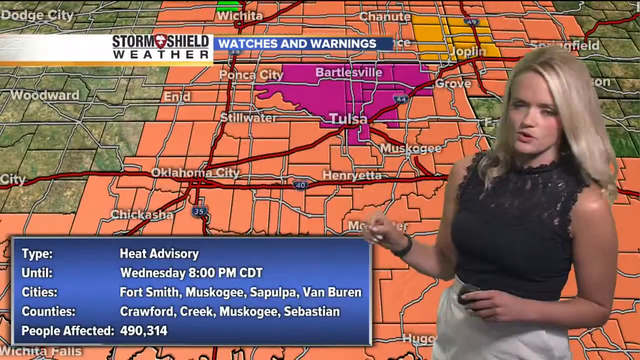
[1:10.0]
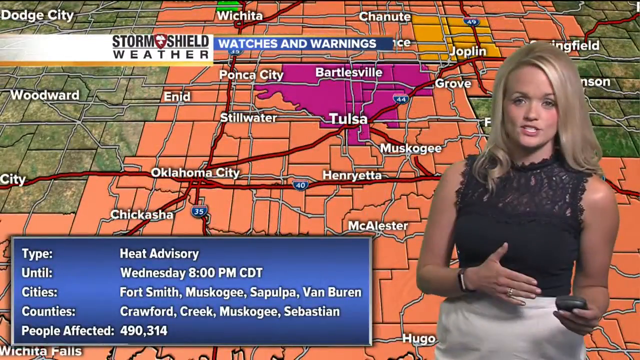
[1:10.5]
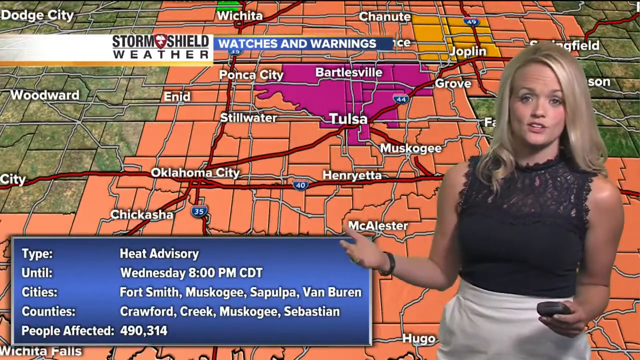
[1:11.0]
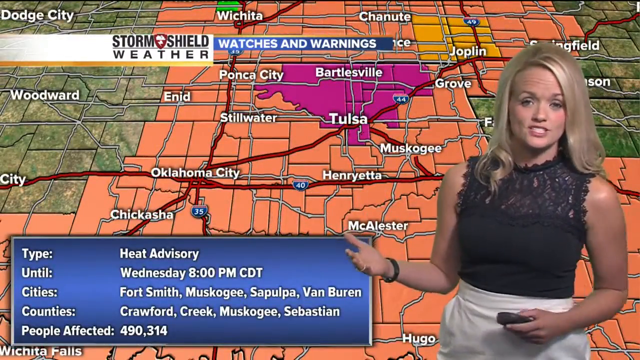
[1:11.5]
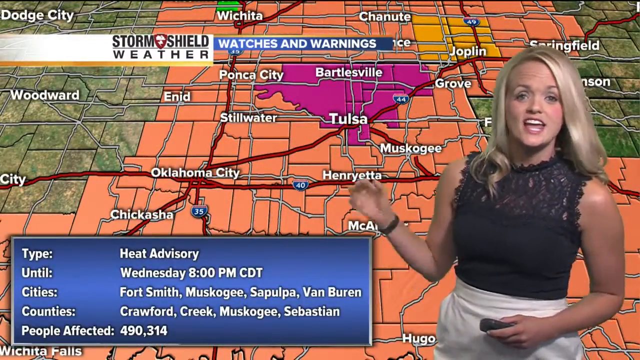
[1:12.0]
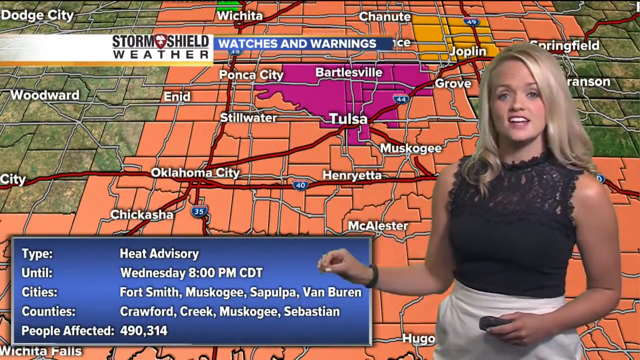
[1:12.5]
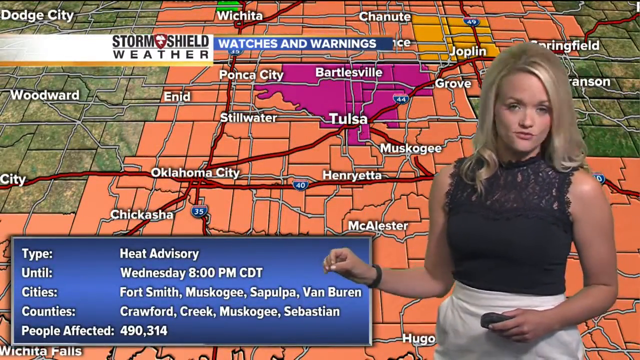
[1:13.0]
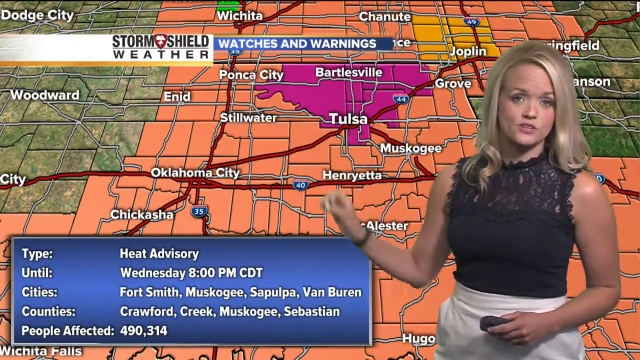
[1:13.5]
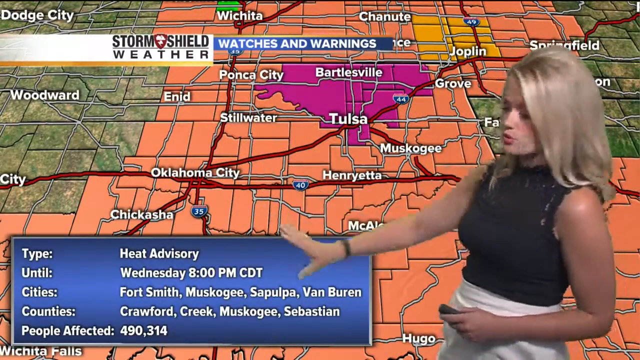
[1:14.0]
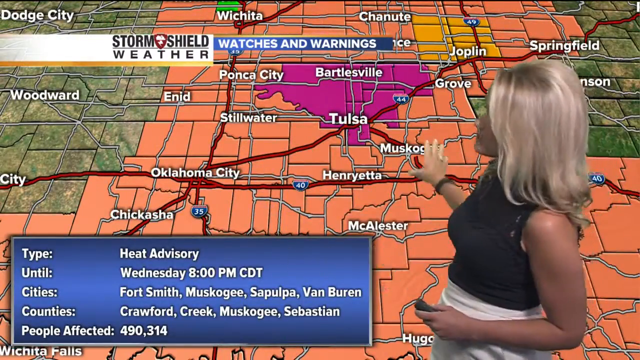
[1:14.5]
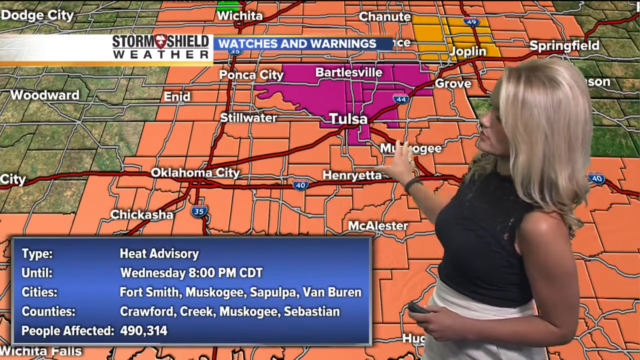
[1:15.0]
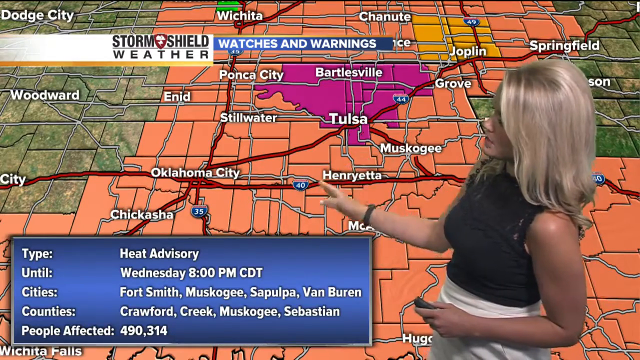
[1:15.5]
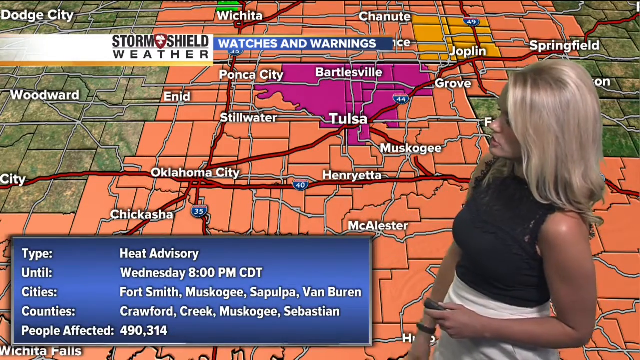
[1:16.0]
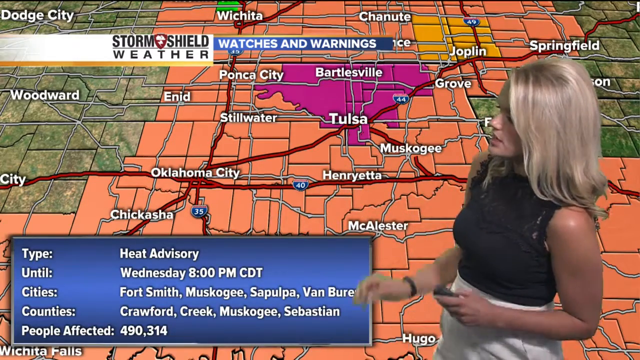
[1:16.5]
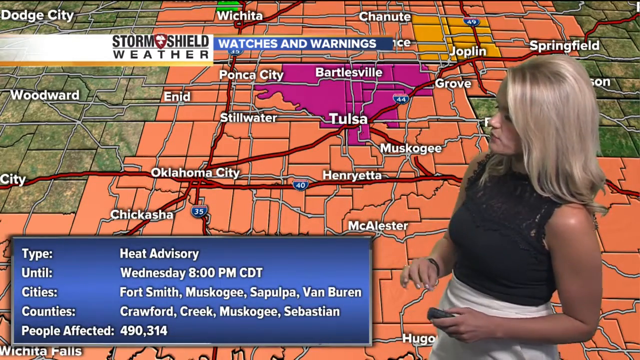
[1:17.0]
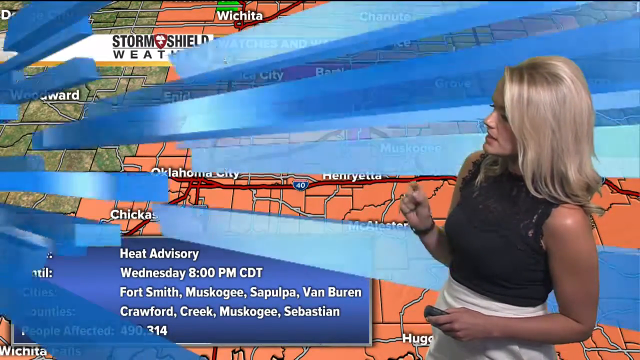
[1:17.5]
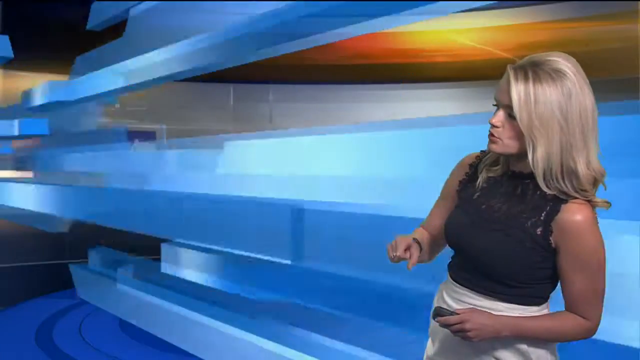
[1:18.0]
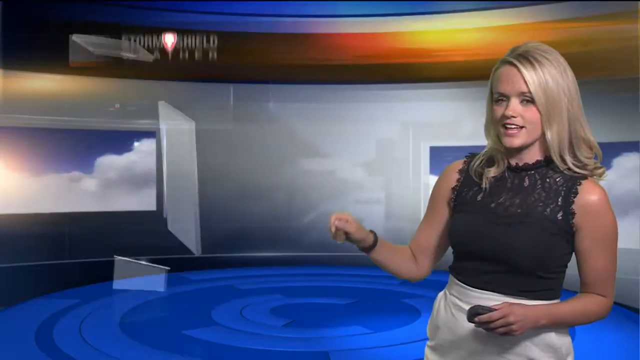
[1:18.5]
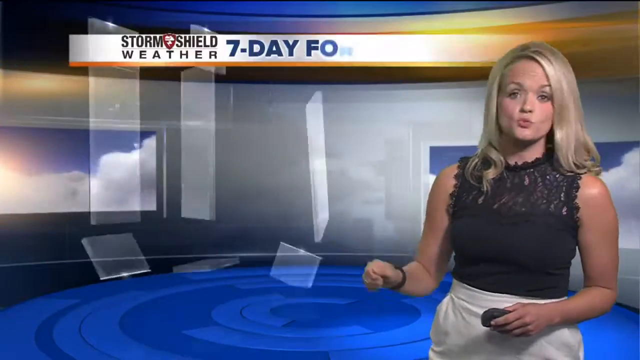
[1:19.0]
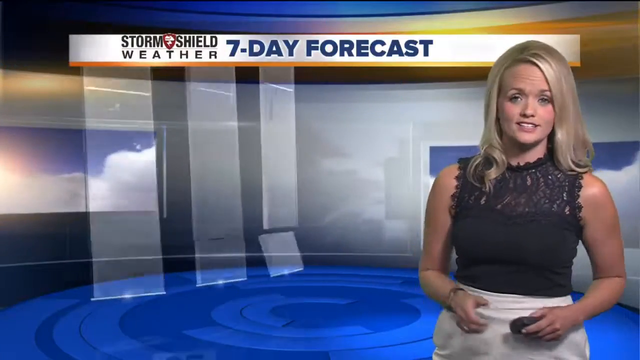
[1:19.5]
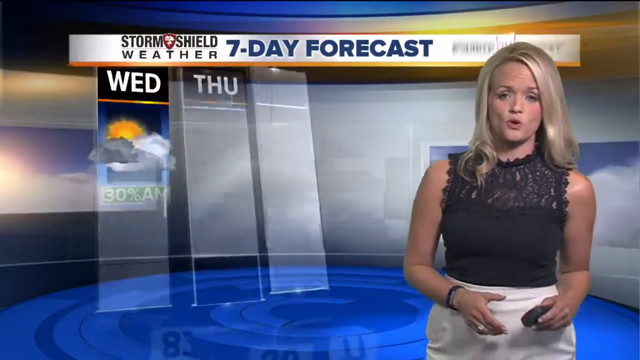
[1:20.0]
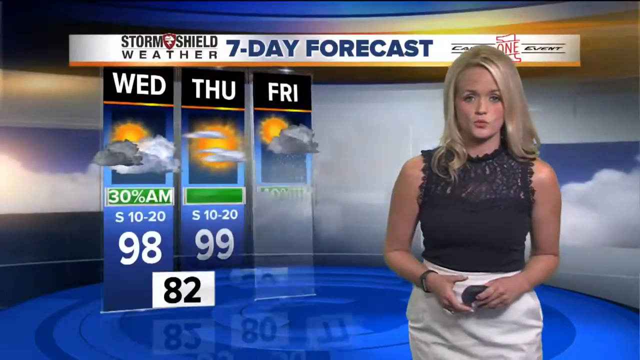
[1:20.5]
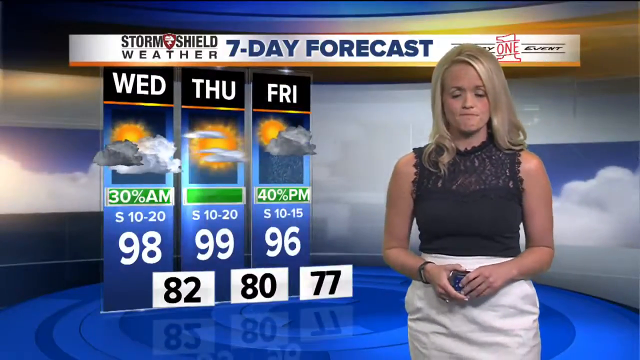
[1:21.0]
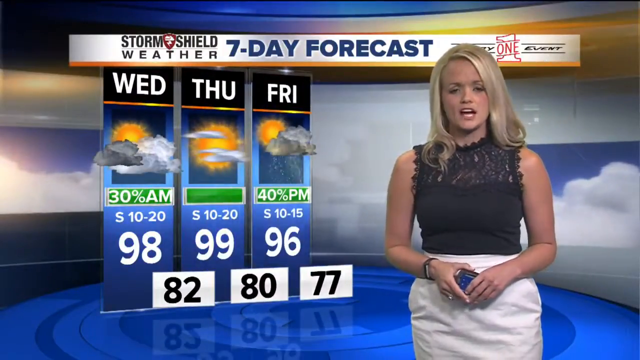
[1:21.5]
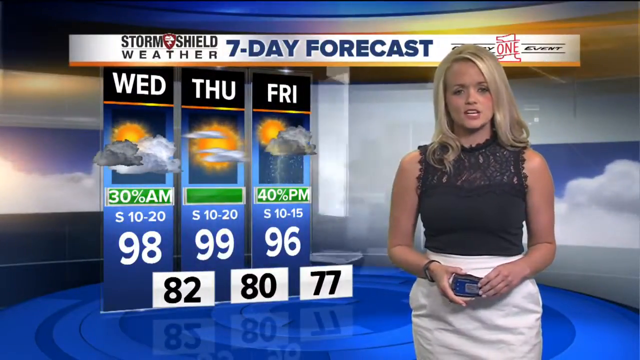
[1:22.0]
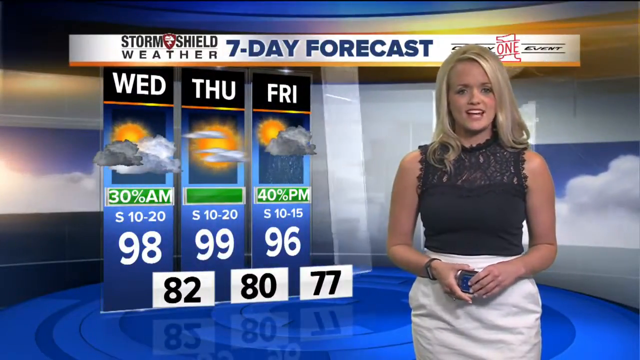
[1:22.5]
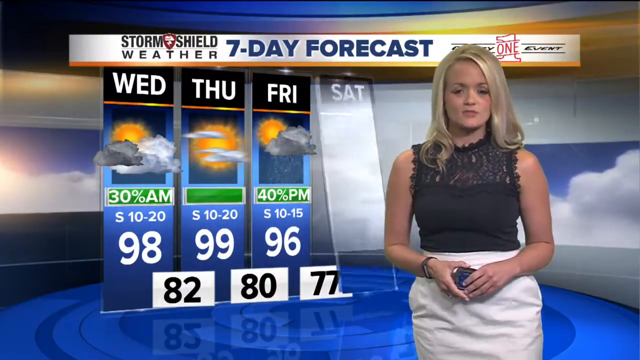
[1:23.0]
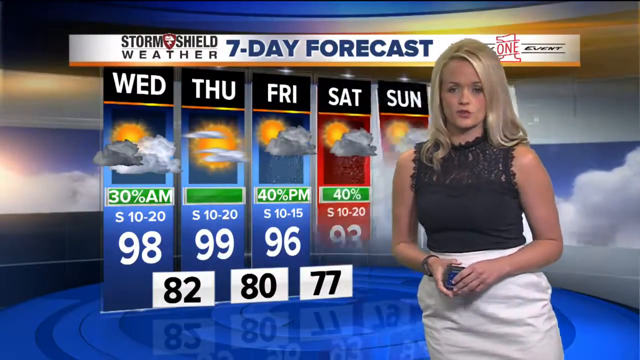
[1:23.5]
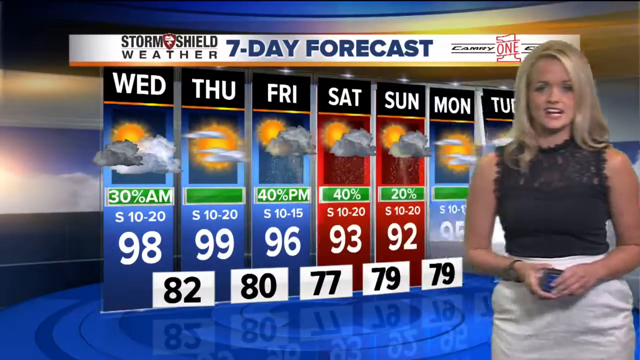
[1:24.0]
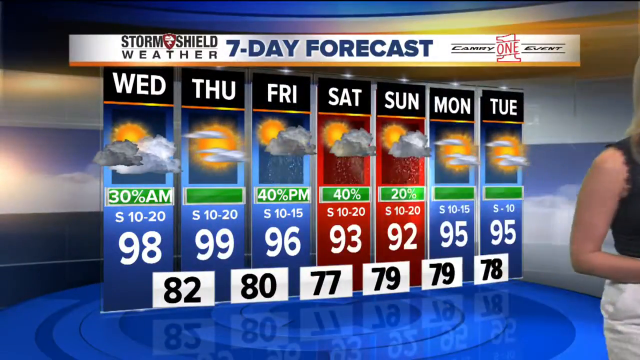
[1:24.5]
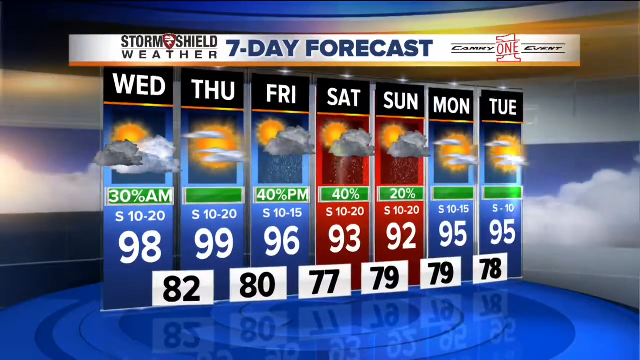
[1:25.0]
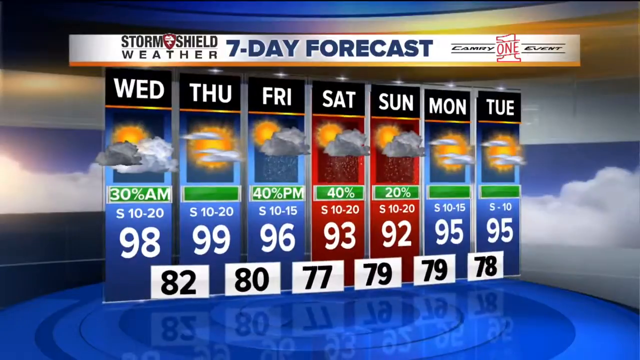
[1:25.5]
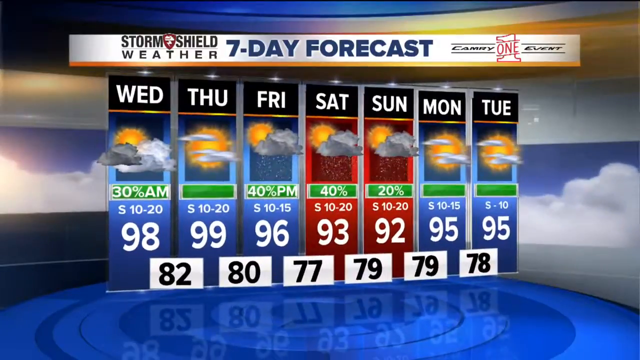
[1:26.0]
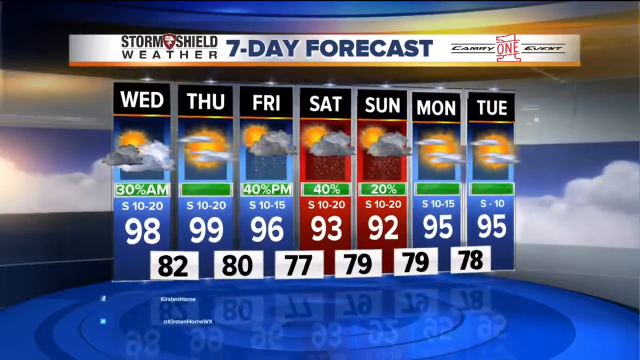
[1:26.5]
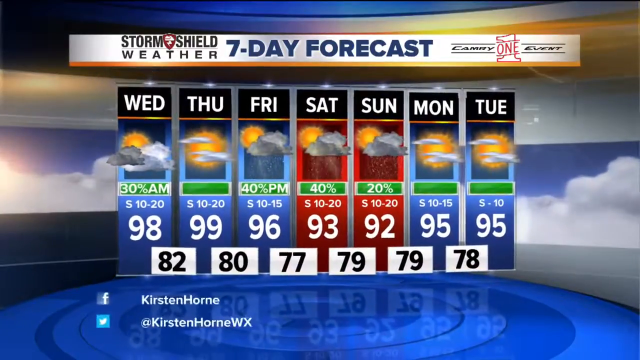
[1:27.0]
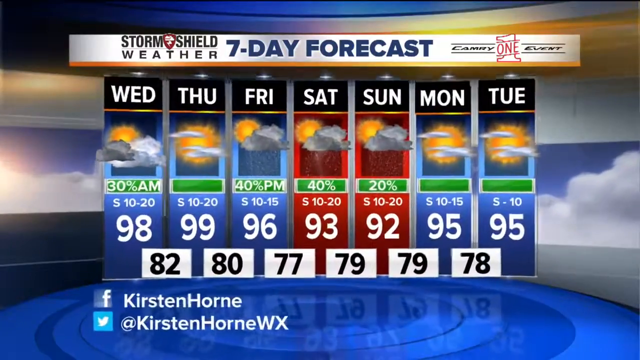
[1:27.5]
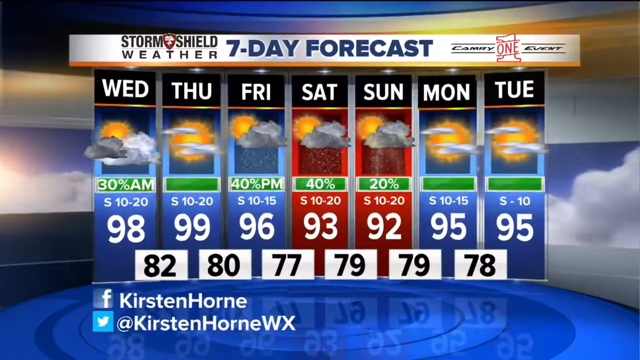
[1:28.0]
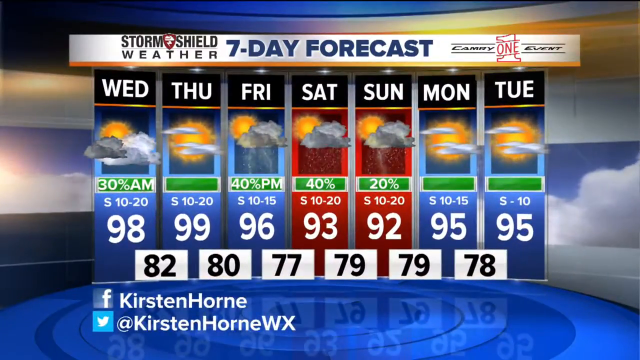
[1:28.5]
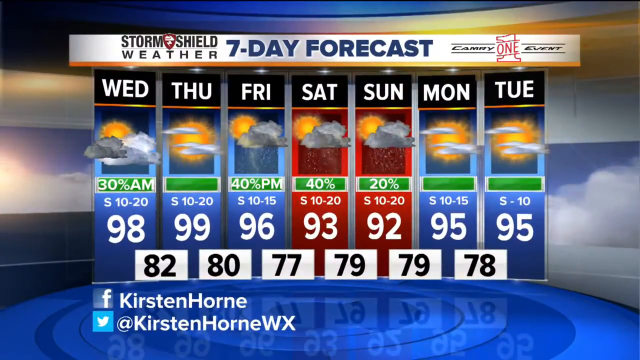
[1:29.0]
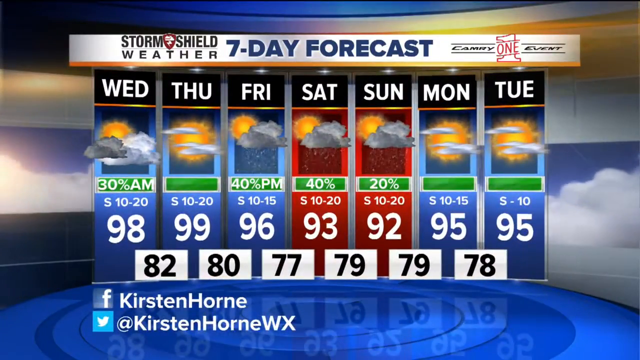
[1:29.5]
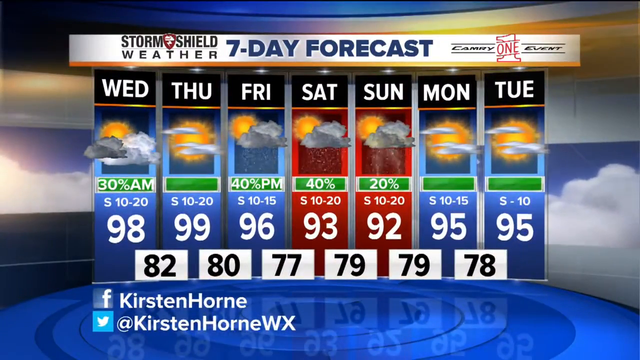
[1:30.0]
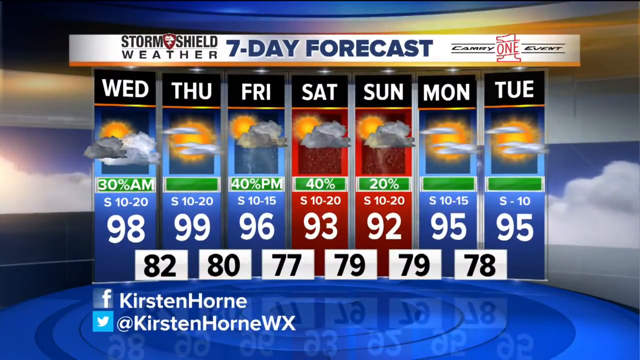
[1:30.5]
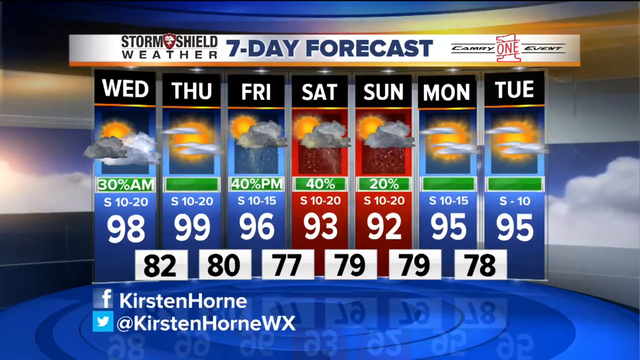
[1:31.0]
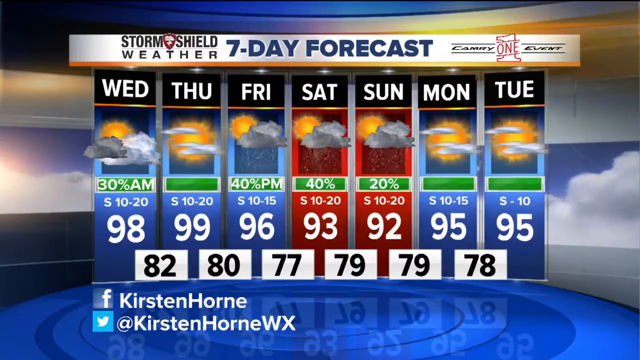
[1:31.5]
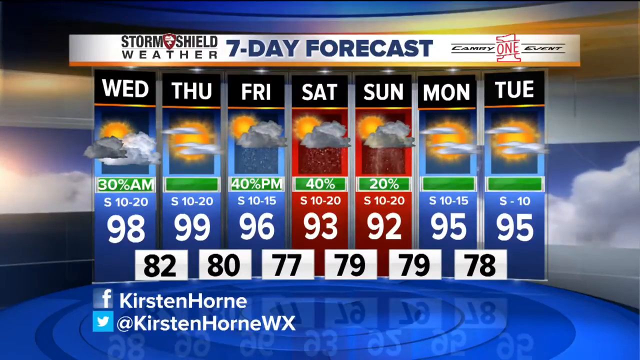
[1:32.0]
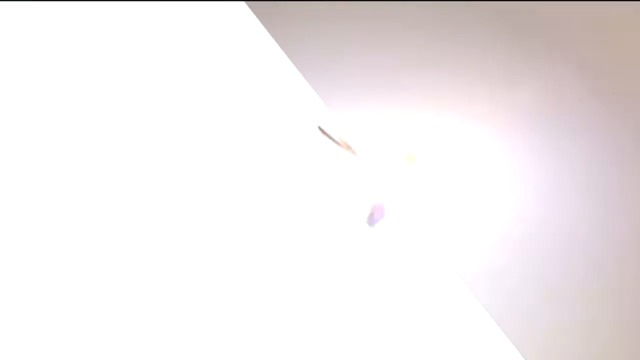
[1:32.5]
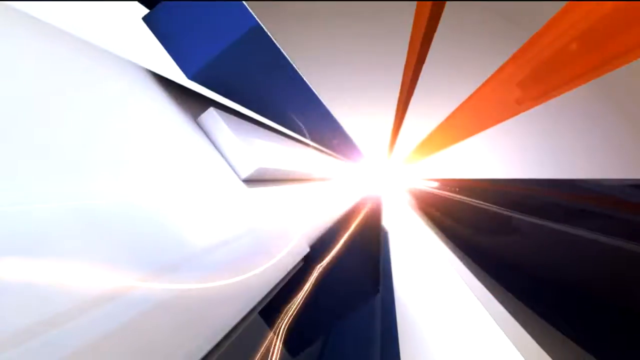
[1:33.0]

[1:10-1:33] A weather map is shown, mostly green with some shading, maybe indicating grass or land masses. It is separated into counties by dark black lines, and there are also some white lines whose purpose is unclear. Highways connecting the cities are highlighted in red, with blue shields with red tops marking each highway. Apparently to the northwest is a writhing, rolling green mass indicating a storm, with orange and yellow blotches within it marking particularly severe parts. The camera pans into the storm; the severest parts seem concentrated toward the edges, and the storm appears headed for Parsons. Yellow boxes, orange, red and purple mark the particularly severe parts. The blonde newscaster in a black shirt comes into frame, gesturing with her hands toward the map. She points to a royal blue portion and then down to a rectangle stating a severe thunderstorm watch, and her hands point to various storm fronts. Behind her, the green mass rolls on, apparently continuing east. Above her head toward the right corner is some fog, another storm blowing down. The temperature shows 82 degrees in town. The map then changes to an orangish color, with a large purple blotch in the center of the screen indicating an excessive heat warning for the next couple of days. The map pulls away to show the rest of it now orange, indicating very hot weather, while the west and east of the map are still green, so only the middle areas are affected. Finally, a weather forecast for the next seven days shows hot weather with some storms for the weekend.